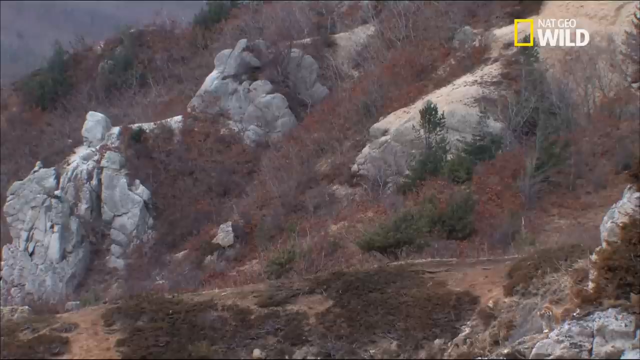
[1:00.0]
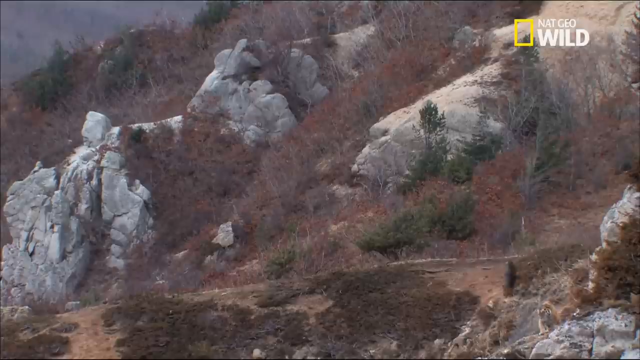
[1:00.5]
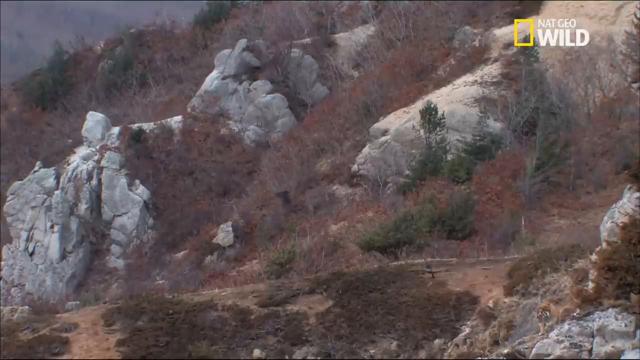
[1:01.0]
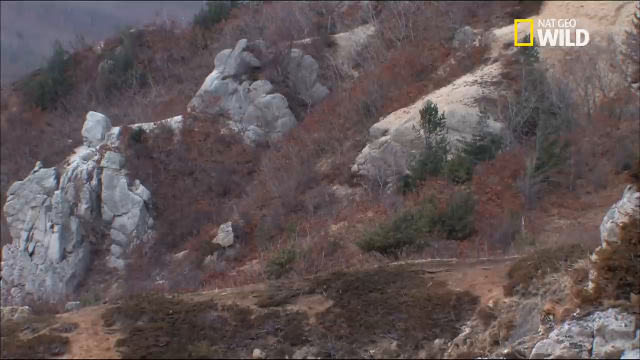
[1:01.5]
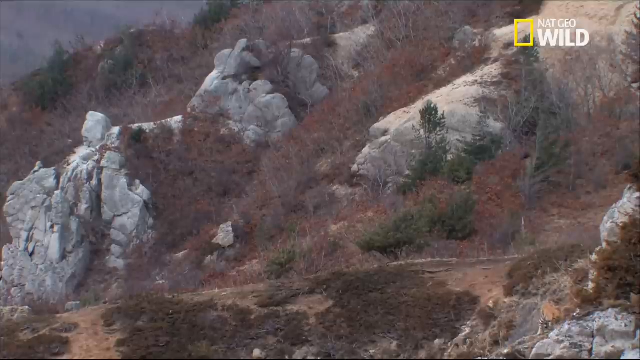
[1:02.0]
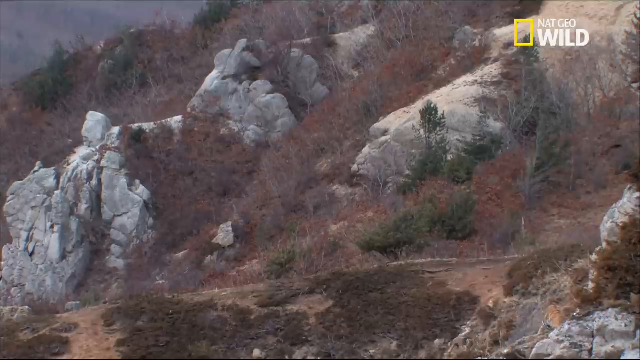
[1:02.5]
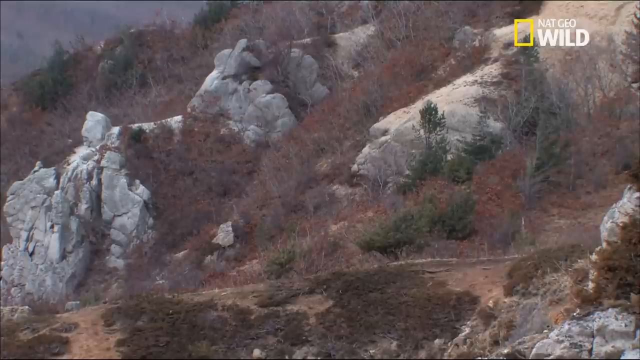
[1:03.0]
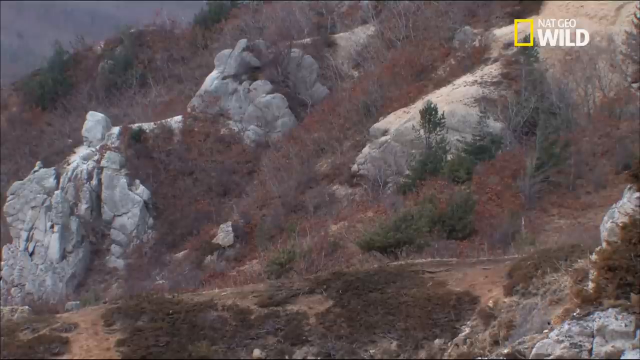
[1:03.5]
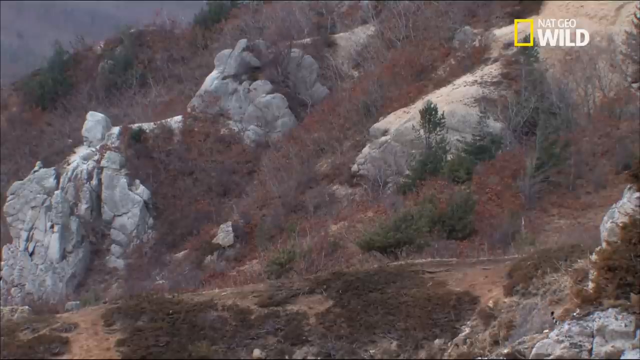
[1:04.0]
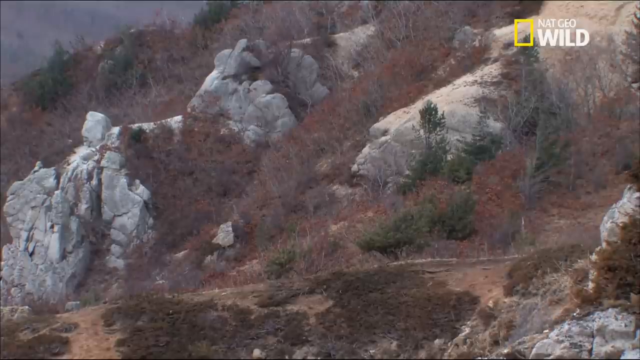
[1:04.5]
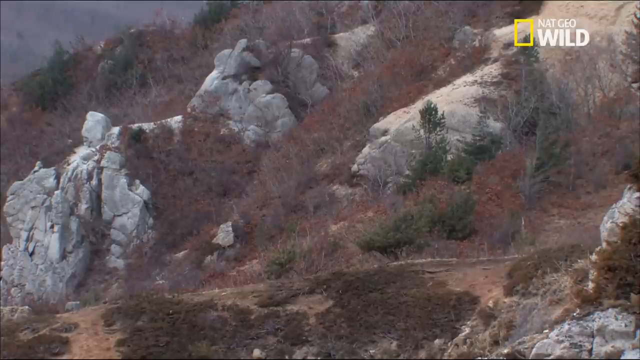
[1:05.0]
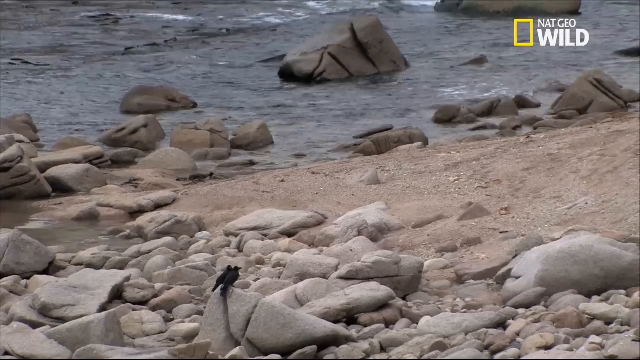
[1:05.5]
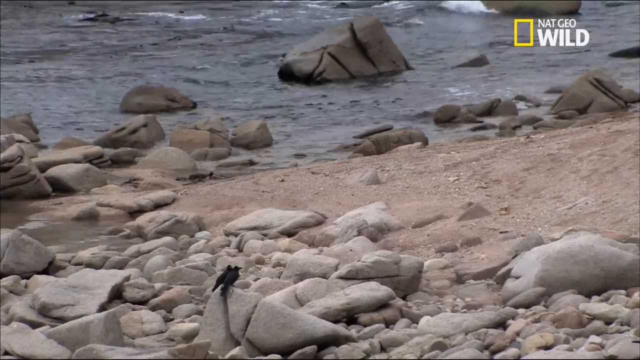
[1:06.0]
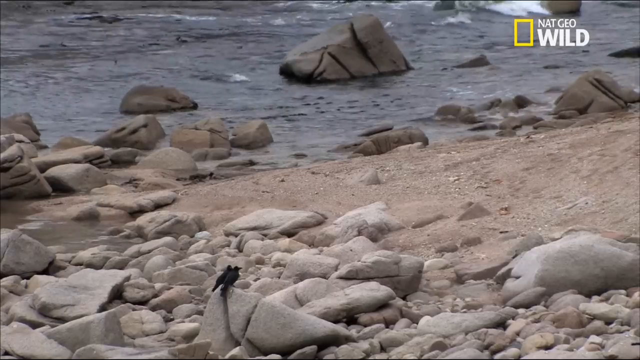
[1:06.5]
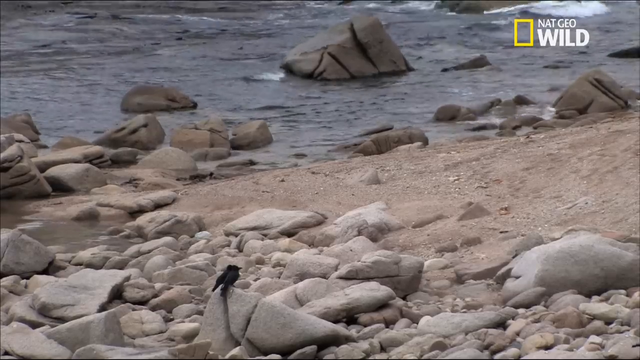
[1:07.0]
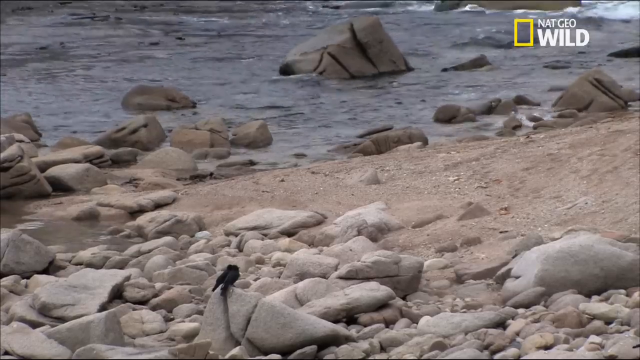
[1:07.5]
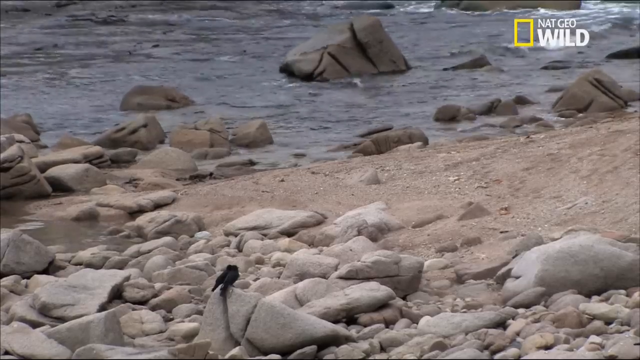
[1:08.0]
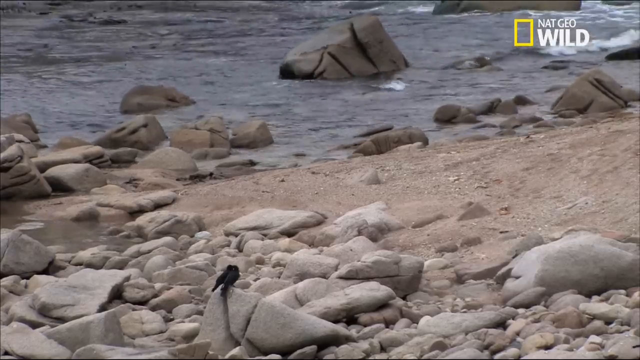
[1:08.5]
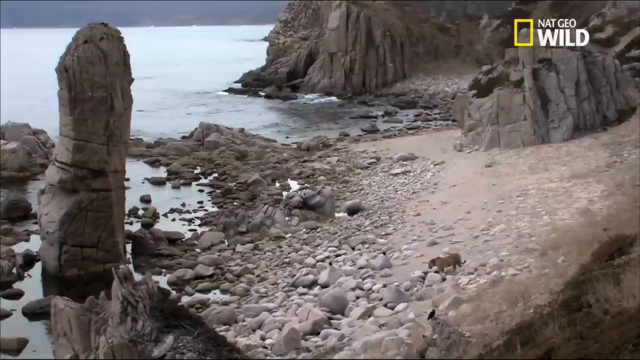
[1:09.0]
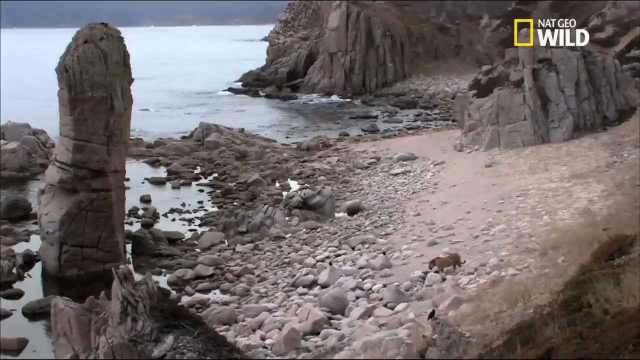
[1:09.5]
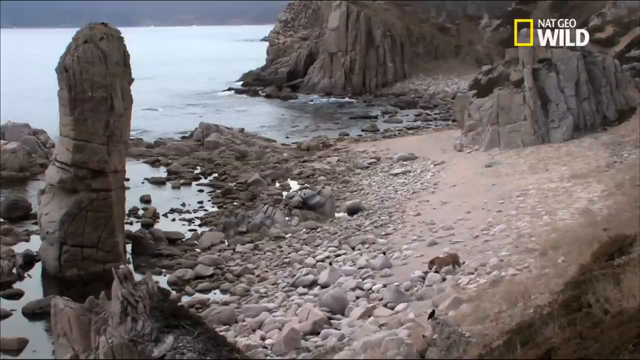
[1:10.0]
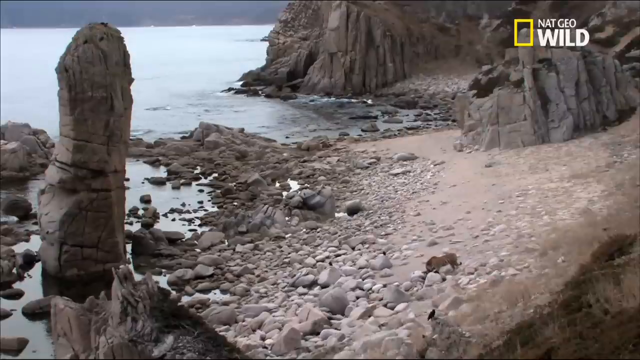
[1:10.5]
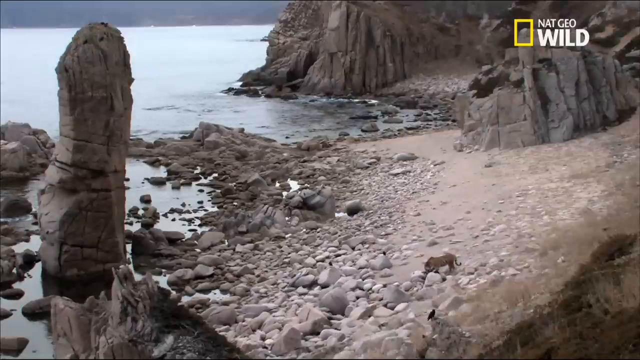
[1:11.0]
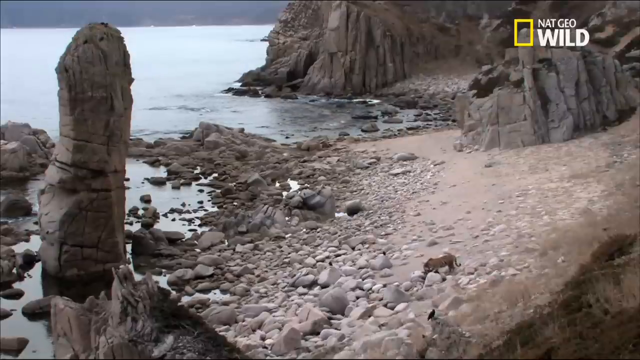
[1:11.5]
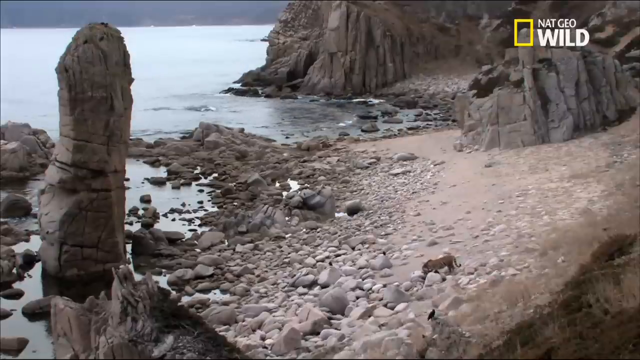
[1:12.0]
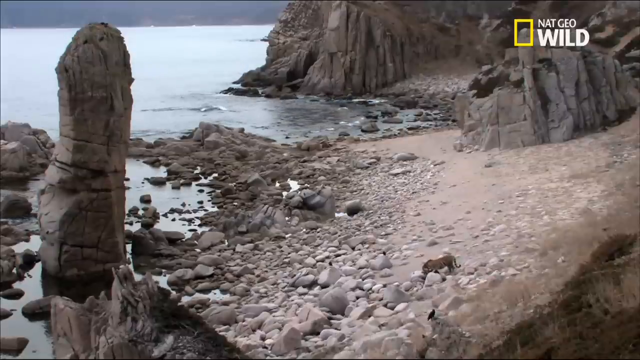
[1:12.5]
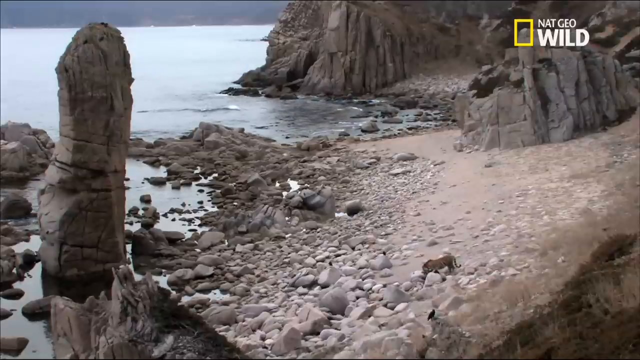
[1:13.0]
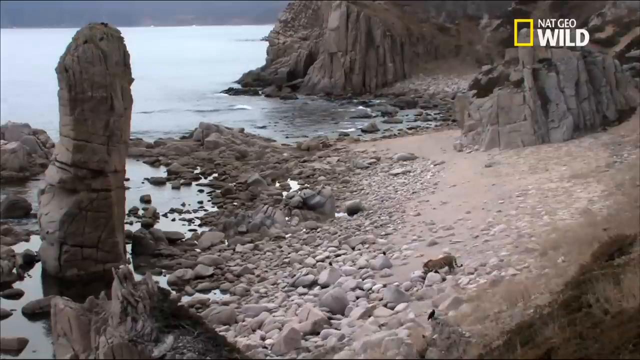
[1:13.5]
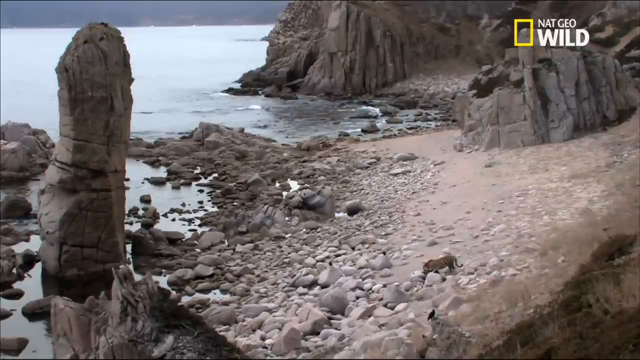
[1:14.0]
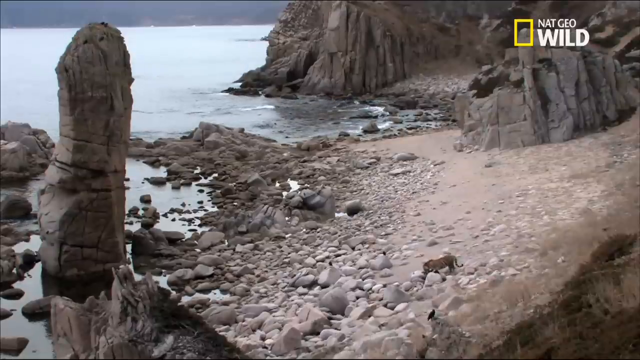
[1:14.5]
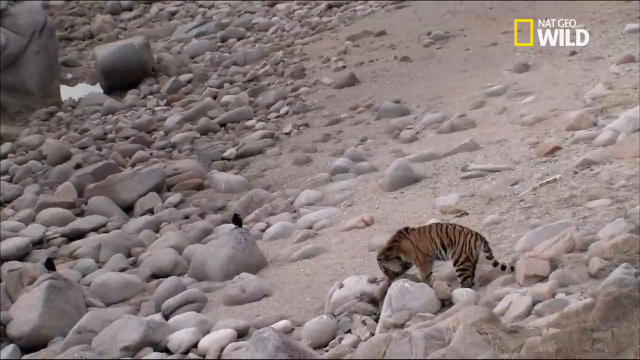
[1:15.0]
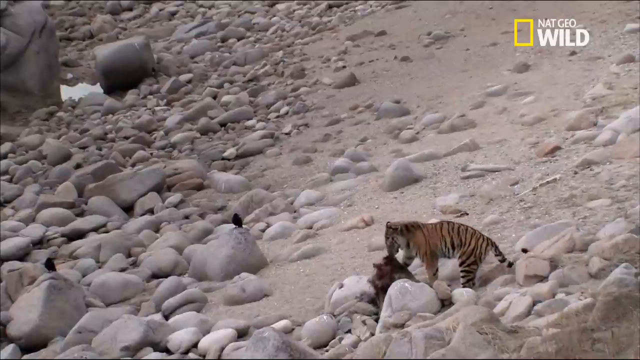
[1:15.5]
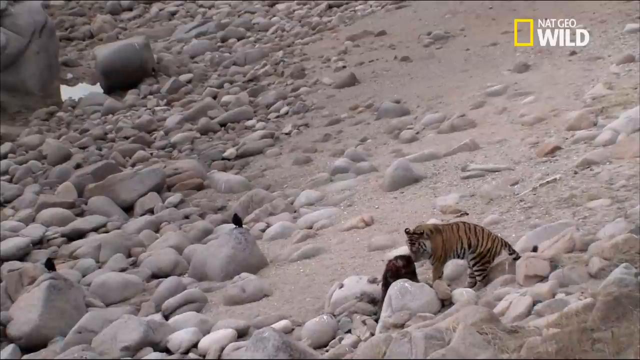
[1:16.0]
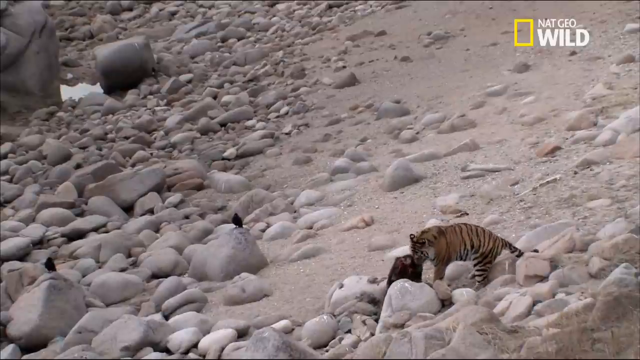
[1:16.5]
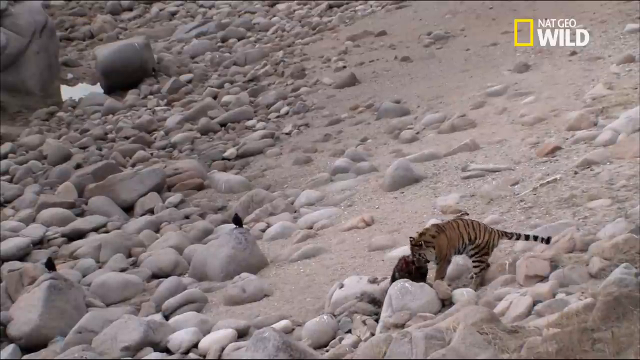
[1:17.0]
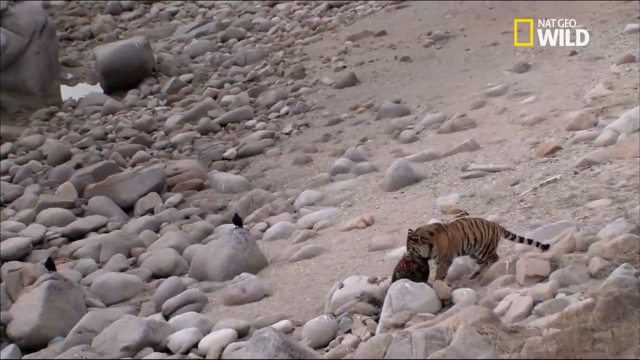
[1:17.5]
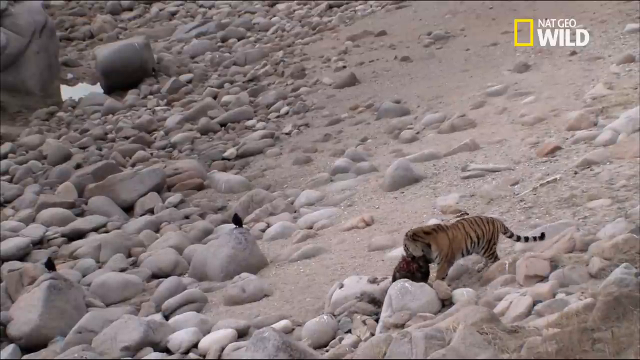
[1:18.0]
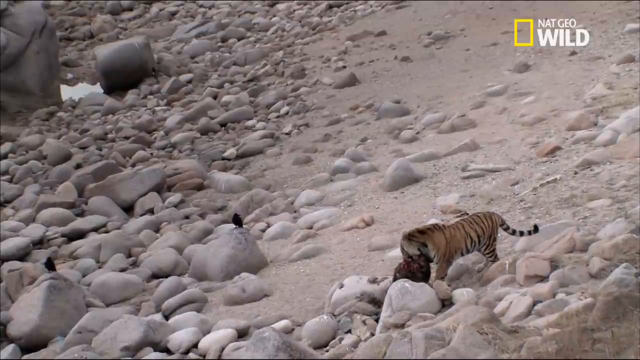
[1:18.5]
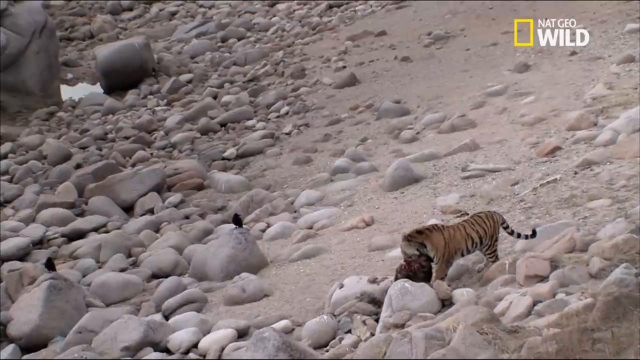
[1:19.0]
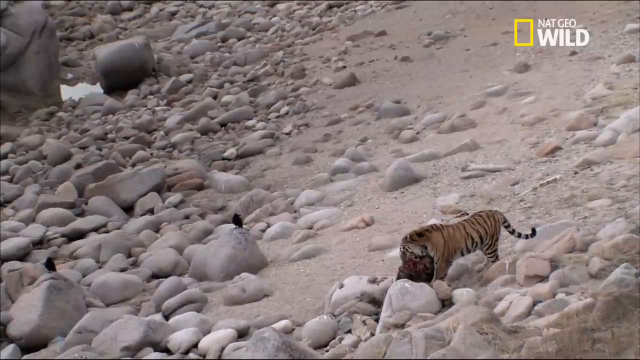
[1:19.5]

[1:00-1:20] With the camera still zoomed out, birds fly across another part of the cliffside, which has much more vegetation; most of the trees are brown and look dead. Gray, rigid rocks are scattered all along the cliffside. The camera flashes over to another shoreline where water slowly moves up on many scattered dark gray rocks. The camera then moves to another shoreline with no water shown but rocks everywhere. A dead bird is among the rocks, and what looks like a tiger grabs it and pulls it out from between the rocks, moving to the right.